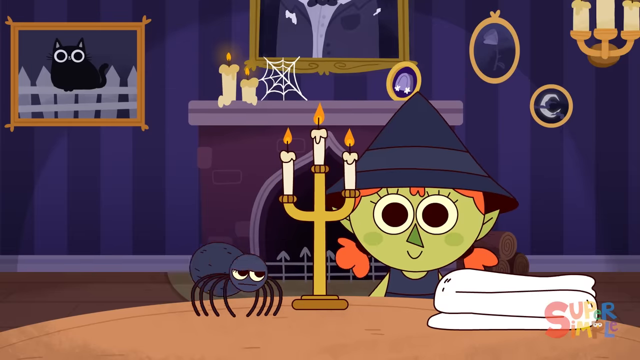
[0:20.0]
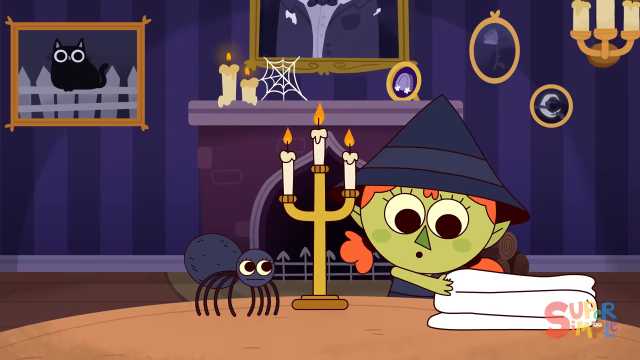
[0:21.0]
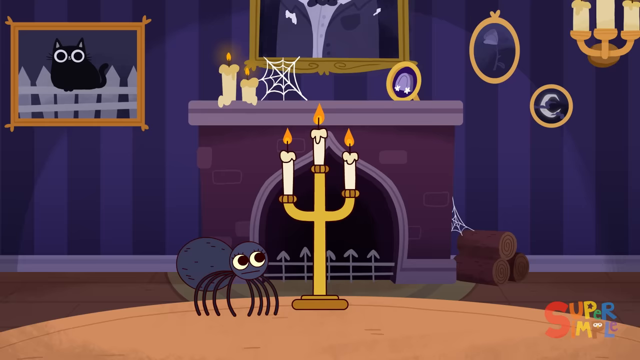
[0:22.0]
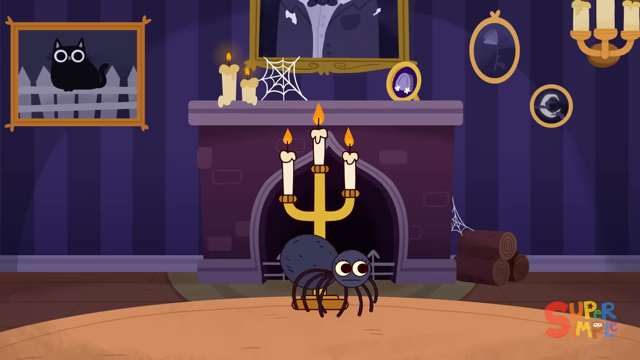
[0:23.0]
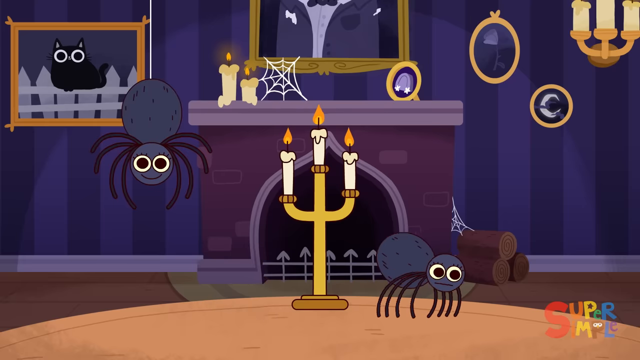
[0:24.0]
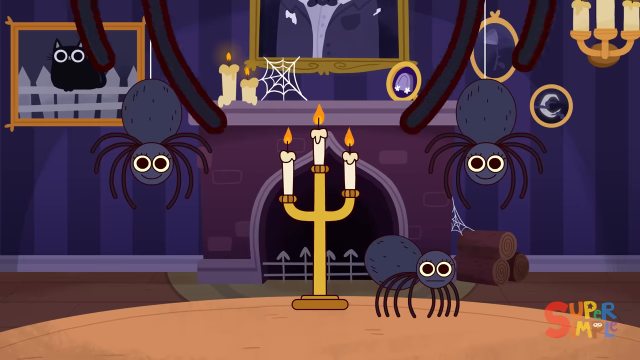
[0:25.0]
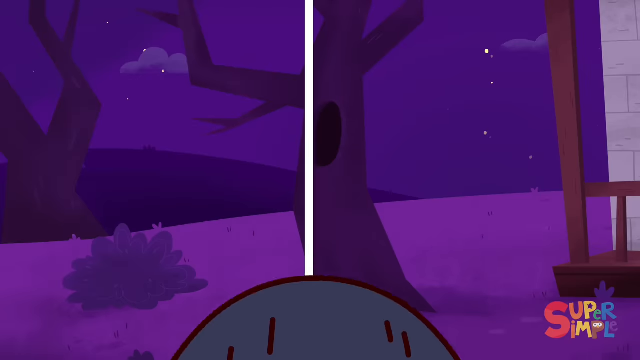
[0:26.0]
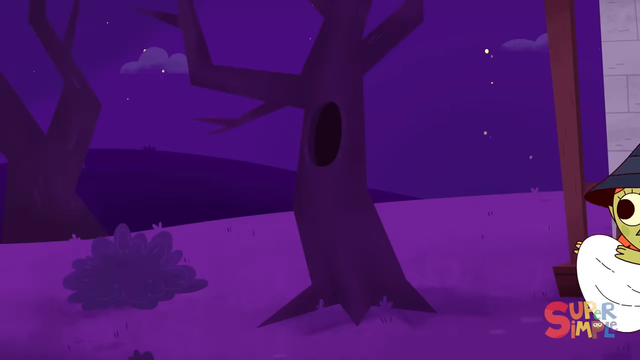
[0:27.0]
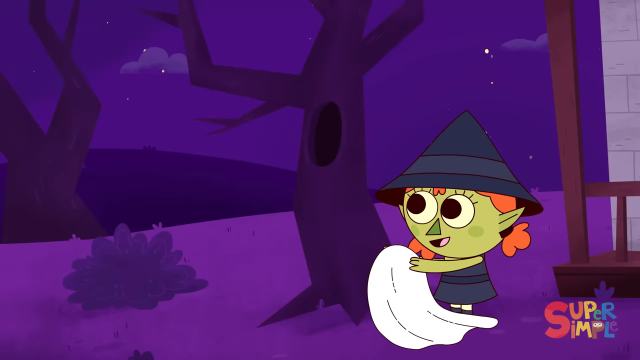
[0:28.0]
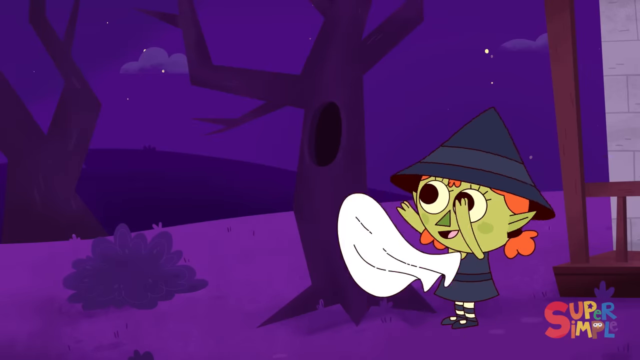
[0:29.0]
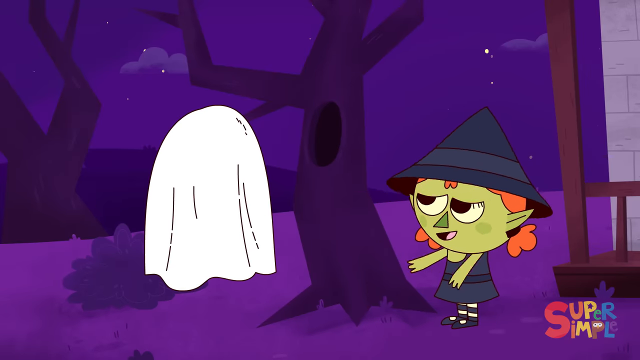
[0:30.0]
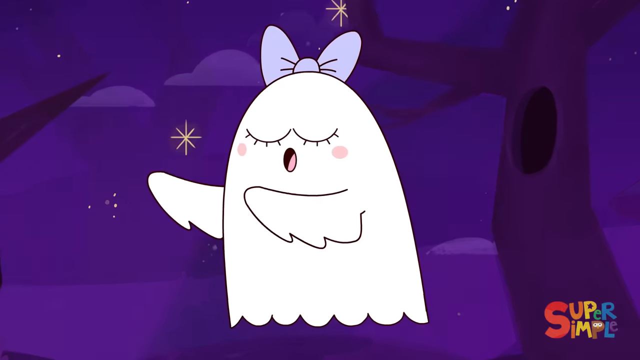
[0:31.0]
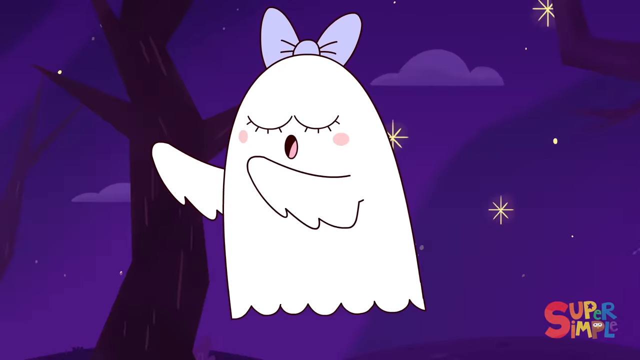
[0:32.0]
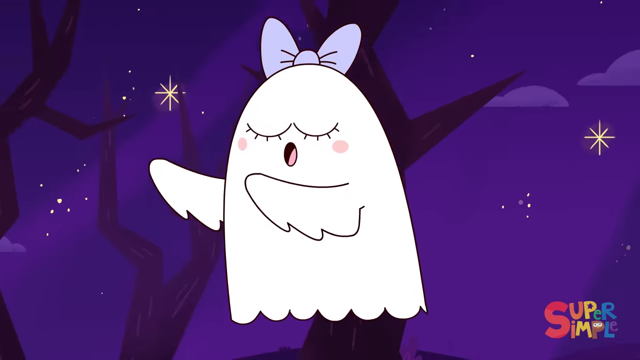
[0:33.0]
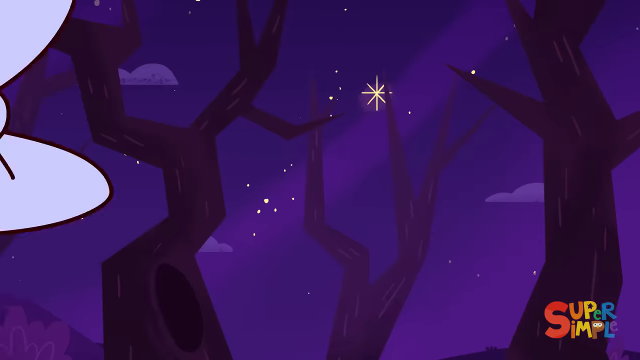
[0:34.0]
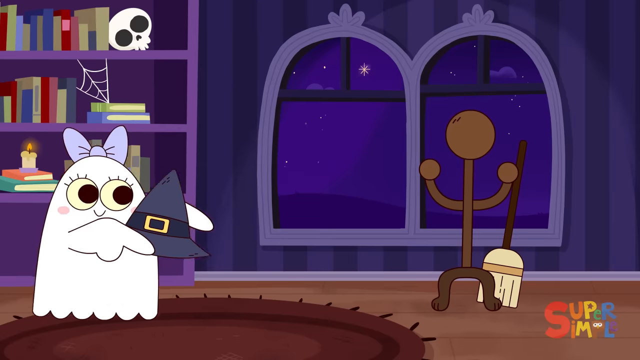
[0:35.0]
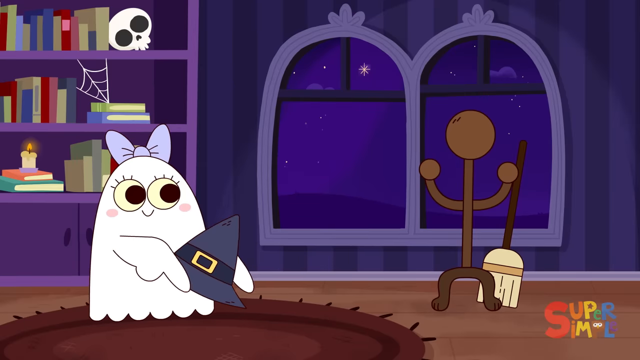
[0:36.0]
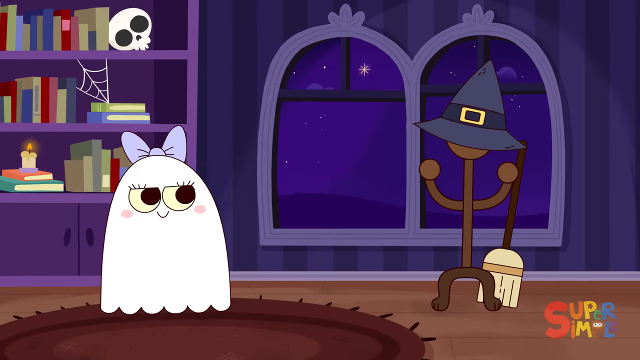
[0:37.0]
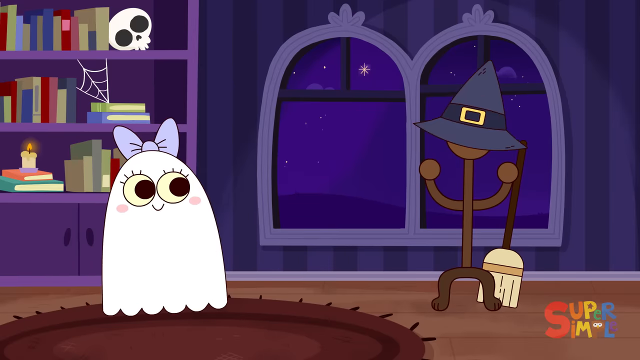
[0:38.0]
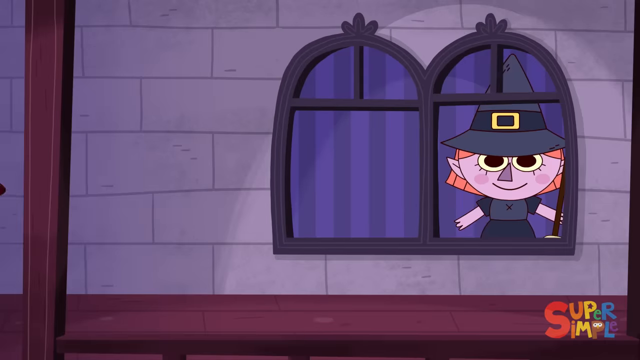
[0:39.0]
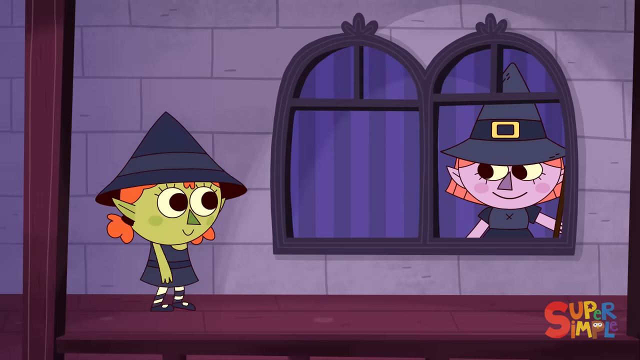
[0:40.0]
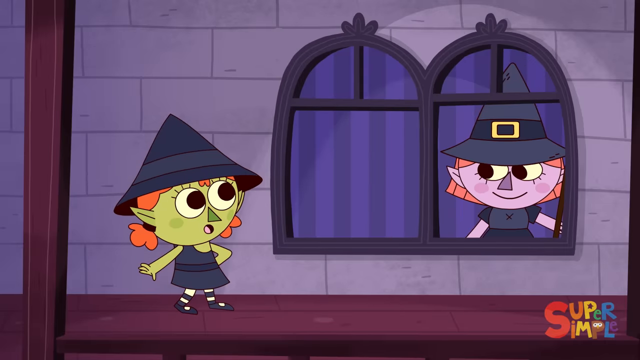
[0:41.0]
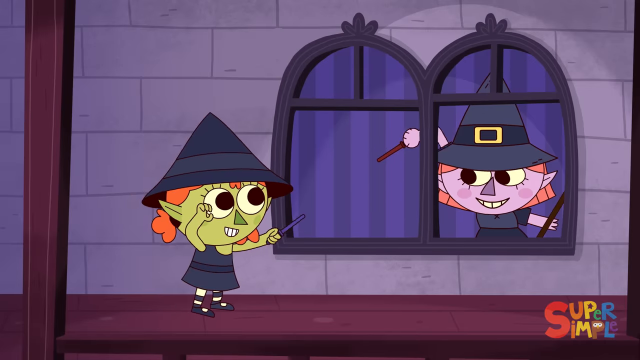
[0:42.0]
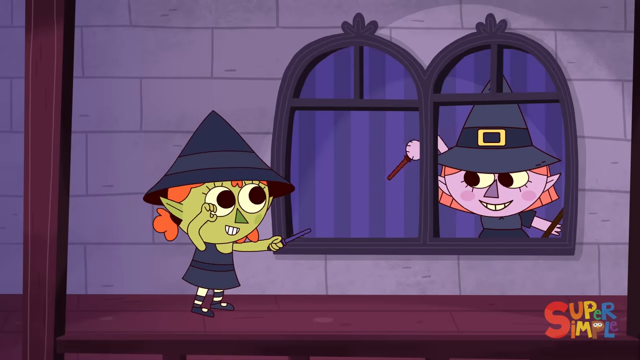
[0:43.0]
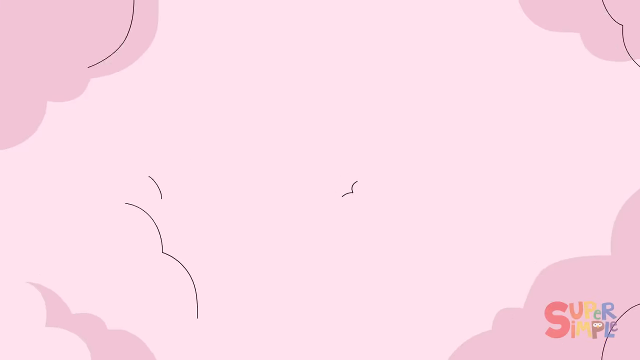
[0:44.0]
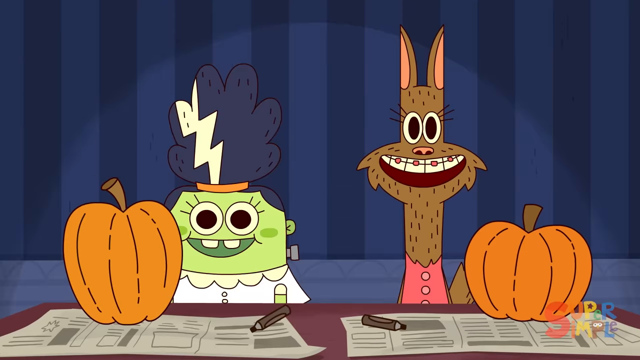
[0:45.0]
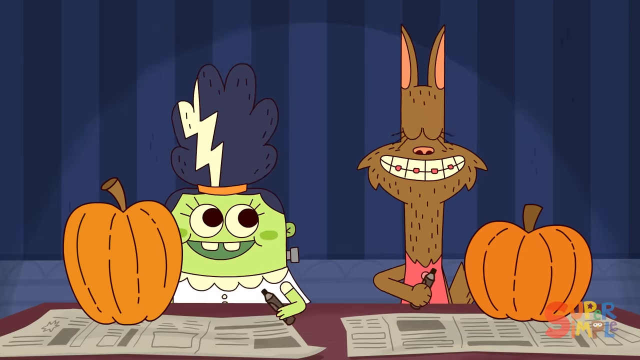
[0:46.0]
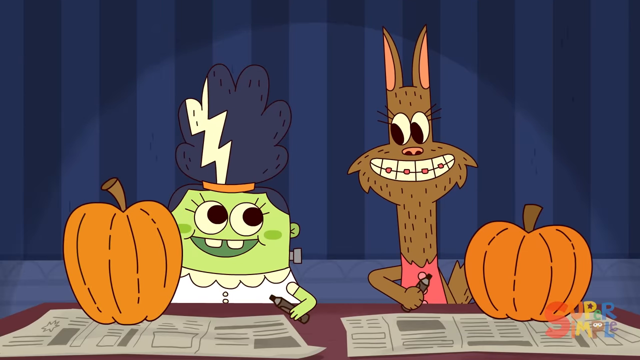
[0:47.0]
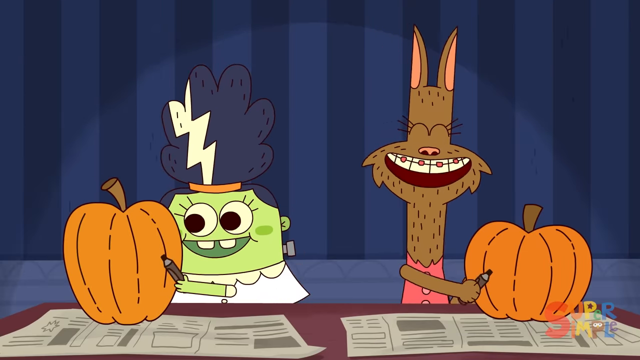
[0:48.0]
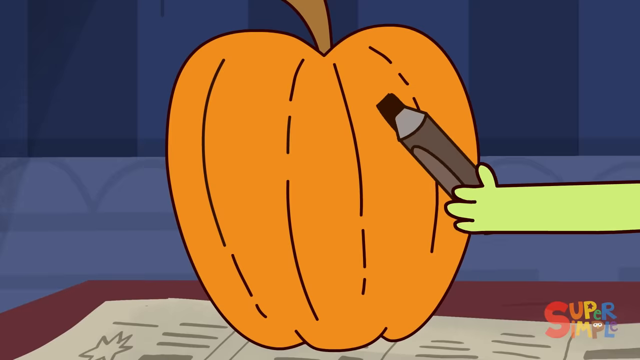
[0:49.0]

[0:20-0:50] A witch and a spider are on a table in front of a fireplace. A candelabra is placed on the fireplace, and behind them are portraits of other spooky things, such as a black cat sitting on a fence and a crescent moon on a stark night. On the unlit fireplace are two candles sitting on top, with a cobweb to the right of the candles. The witch appears at the main table first and is joined by the spider. She takes a blanket off the table and seems to run away with it, and the spider chases after her. Another spider comes down from its web on the ceiling, then two more come down, and finally a third comes down and wipes the scene. The scene resumes with the witch running outside with the blanket. She tosses the blanket onto nothing, but it wraps around a ghost, who then appears and begins to float around, floating left and finally floating right at a very close angle before wiping the scene.